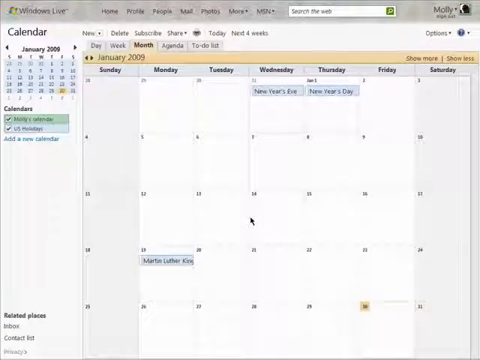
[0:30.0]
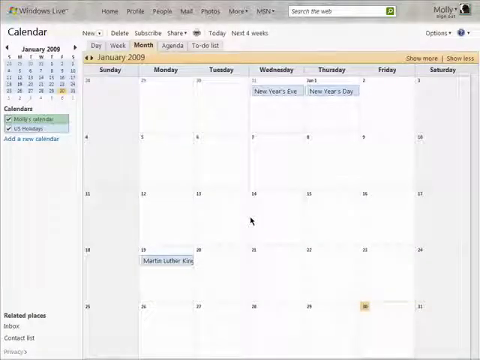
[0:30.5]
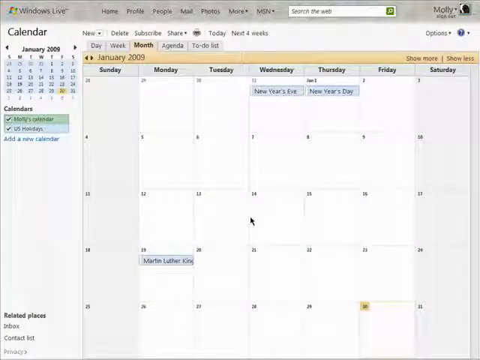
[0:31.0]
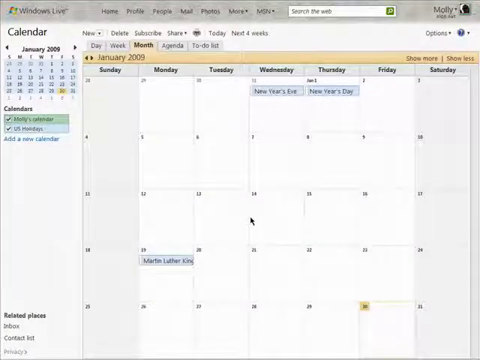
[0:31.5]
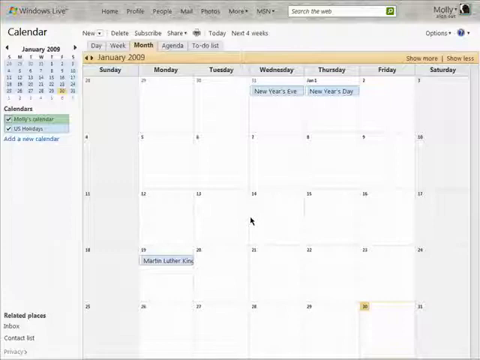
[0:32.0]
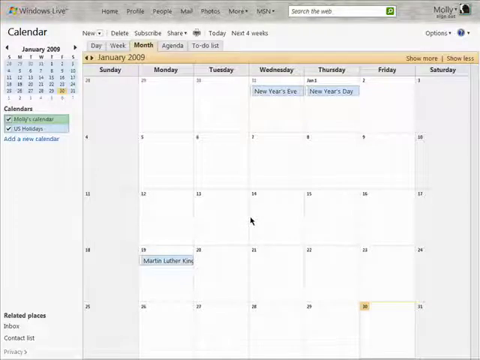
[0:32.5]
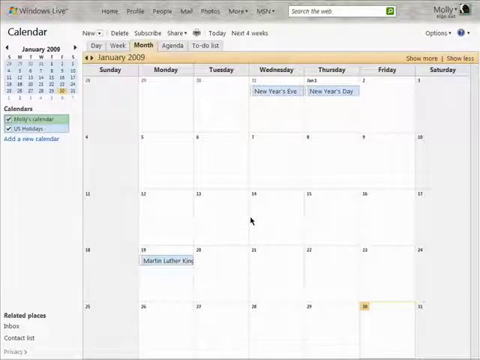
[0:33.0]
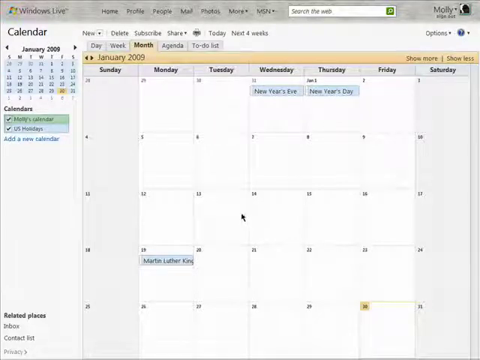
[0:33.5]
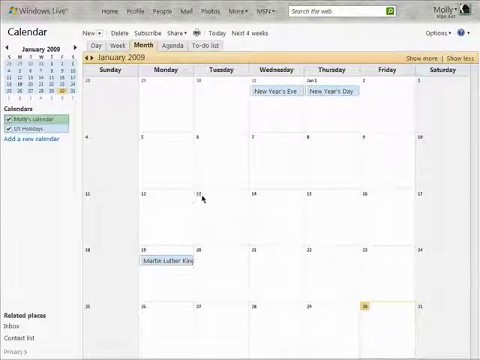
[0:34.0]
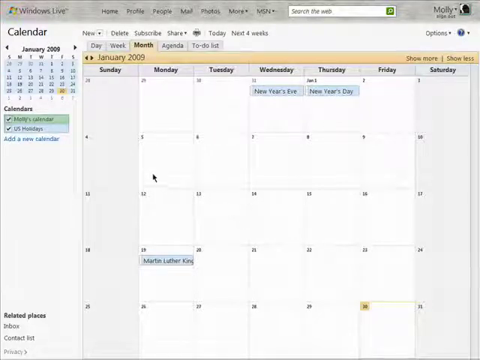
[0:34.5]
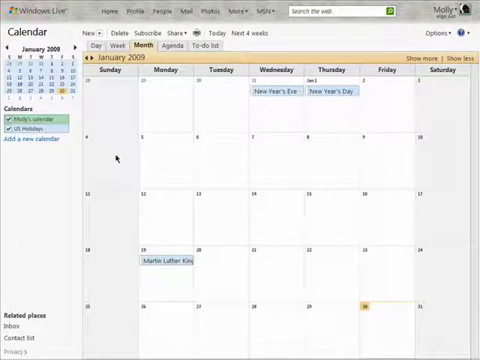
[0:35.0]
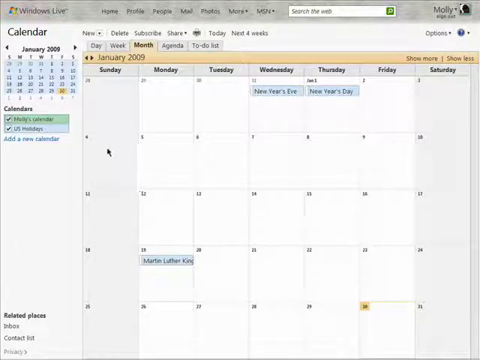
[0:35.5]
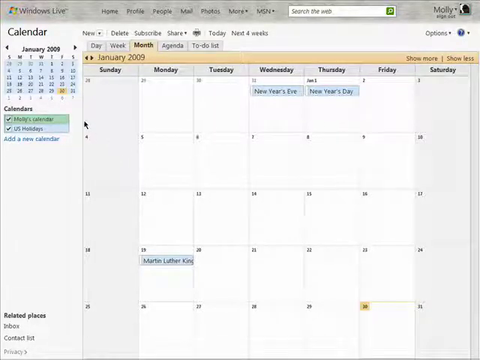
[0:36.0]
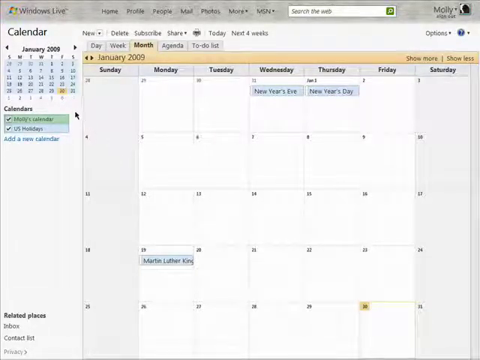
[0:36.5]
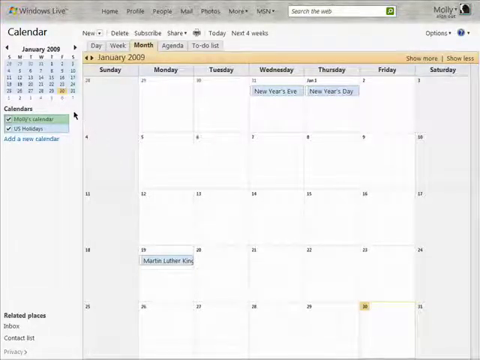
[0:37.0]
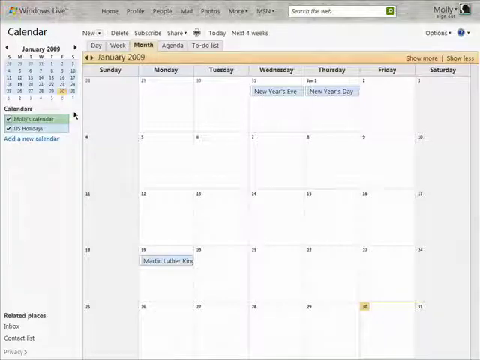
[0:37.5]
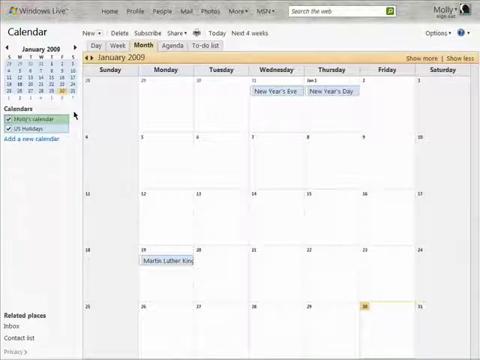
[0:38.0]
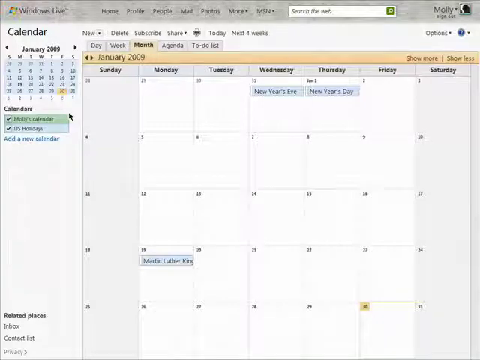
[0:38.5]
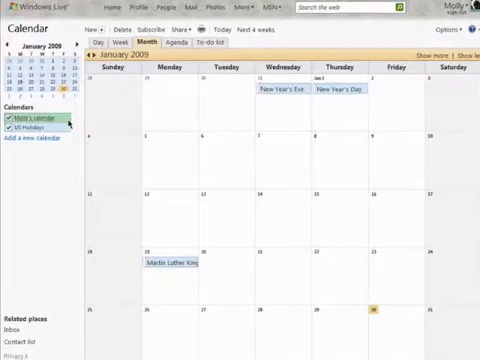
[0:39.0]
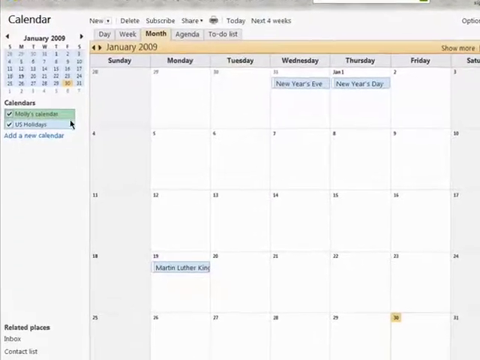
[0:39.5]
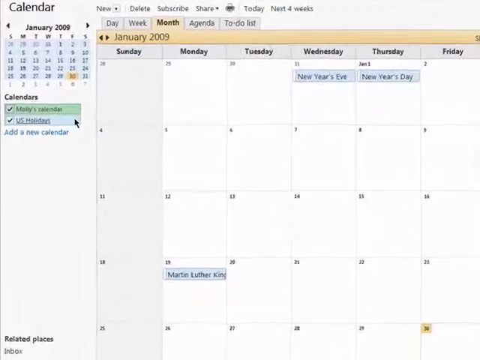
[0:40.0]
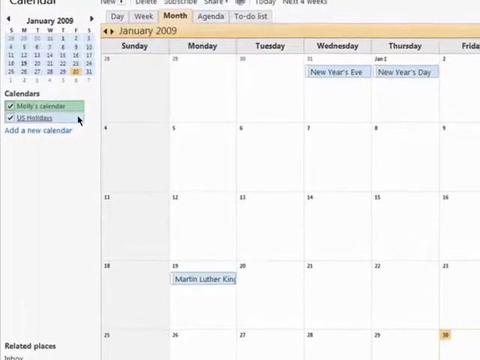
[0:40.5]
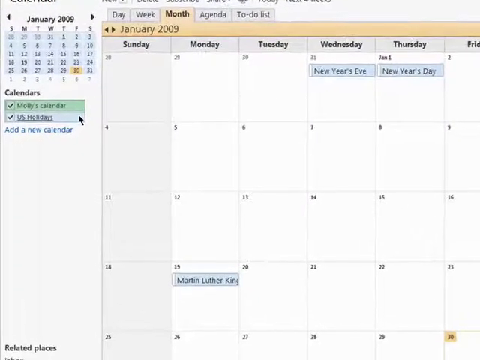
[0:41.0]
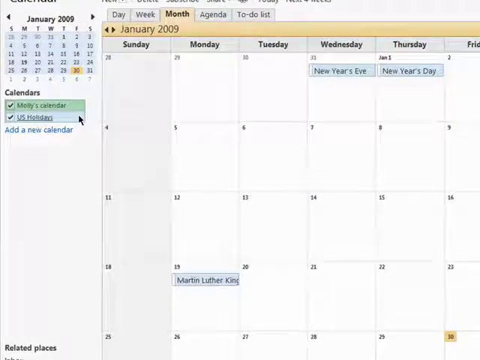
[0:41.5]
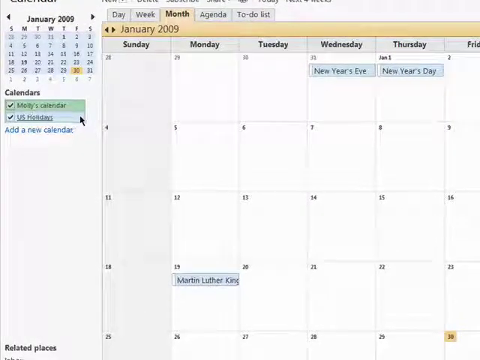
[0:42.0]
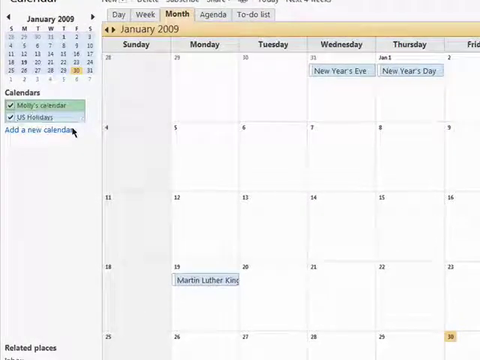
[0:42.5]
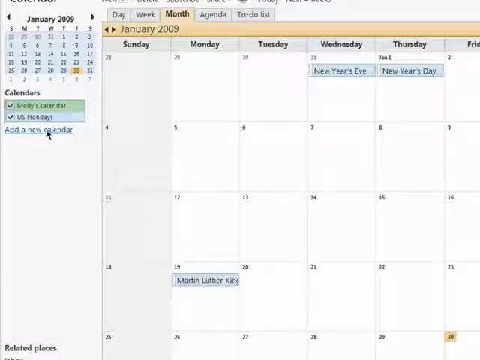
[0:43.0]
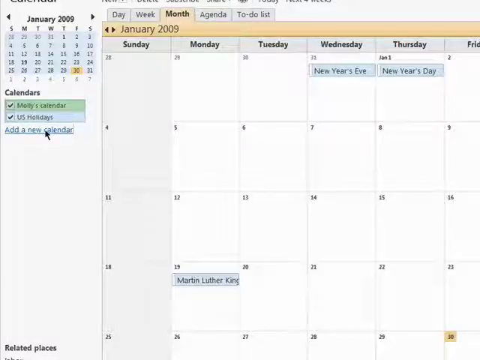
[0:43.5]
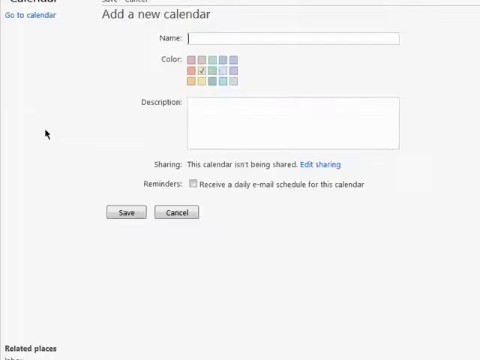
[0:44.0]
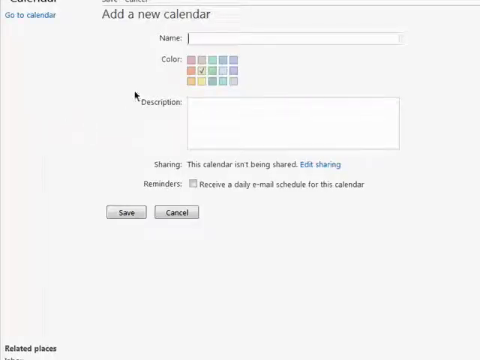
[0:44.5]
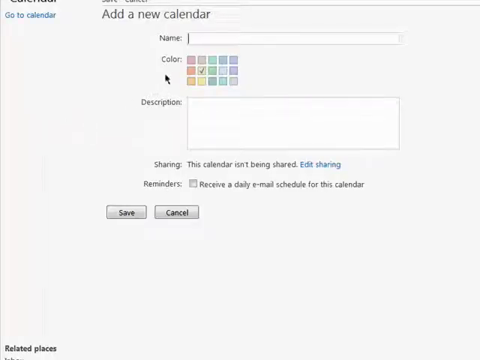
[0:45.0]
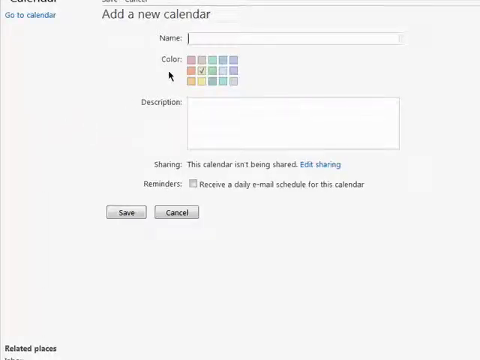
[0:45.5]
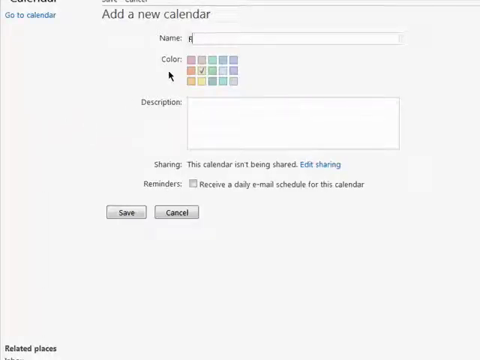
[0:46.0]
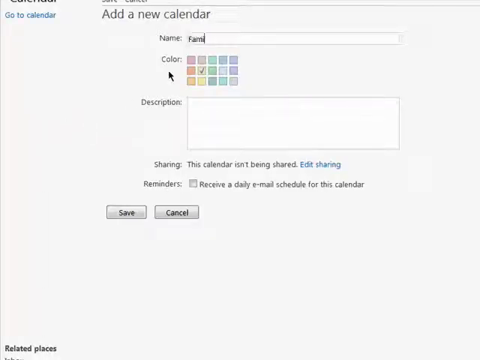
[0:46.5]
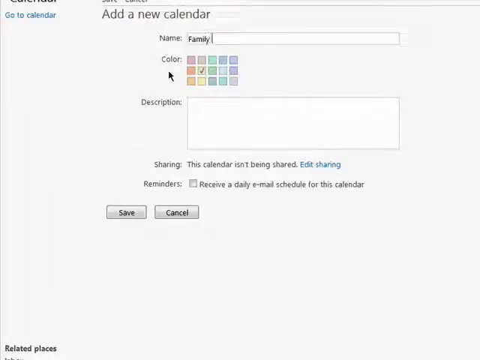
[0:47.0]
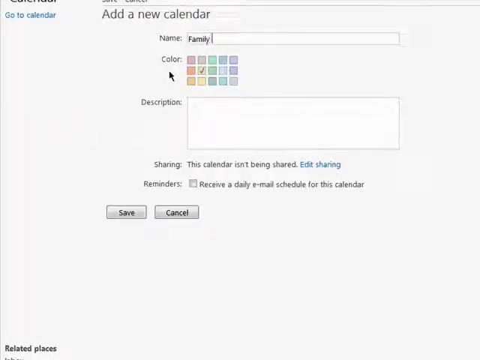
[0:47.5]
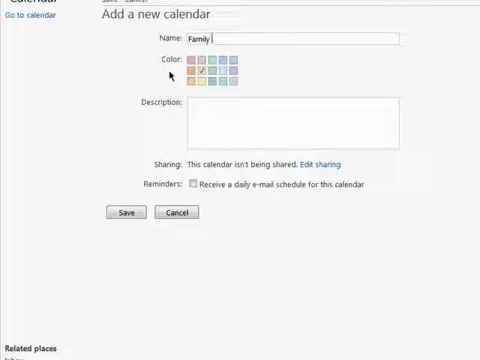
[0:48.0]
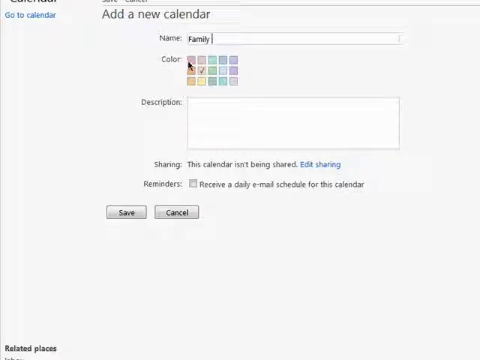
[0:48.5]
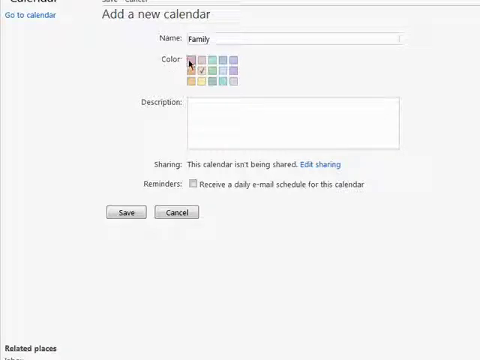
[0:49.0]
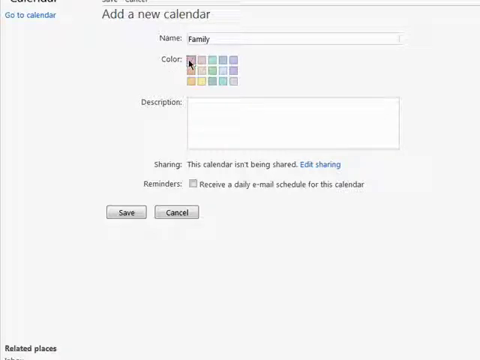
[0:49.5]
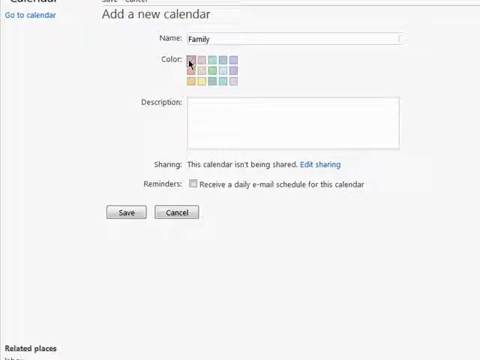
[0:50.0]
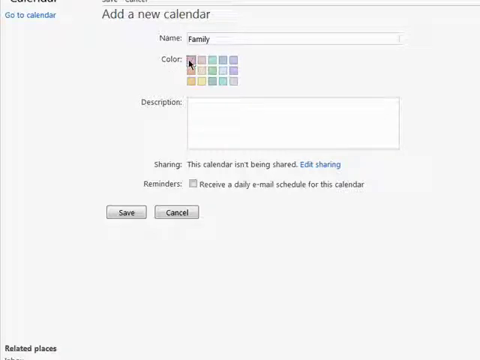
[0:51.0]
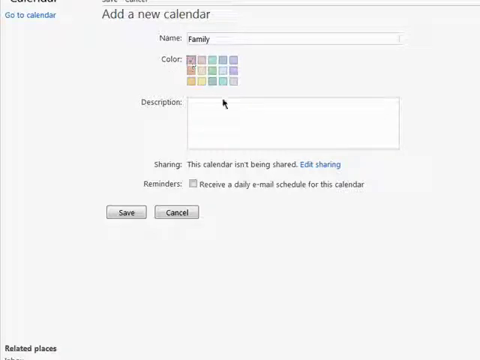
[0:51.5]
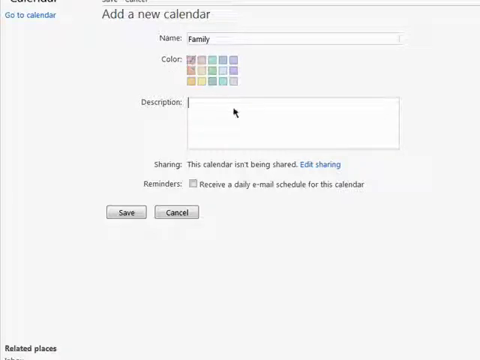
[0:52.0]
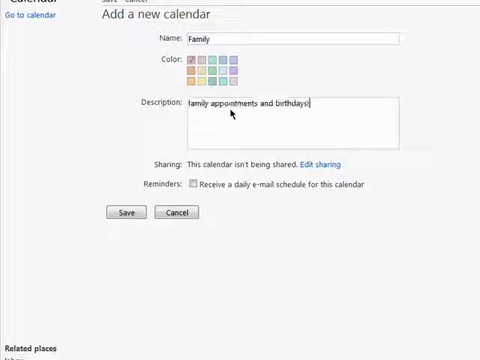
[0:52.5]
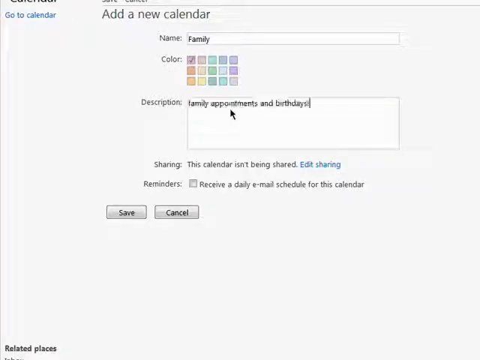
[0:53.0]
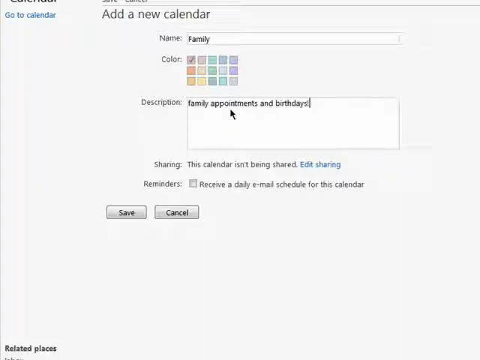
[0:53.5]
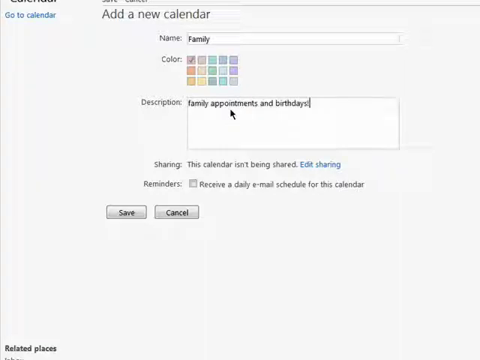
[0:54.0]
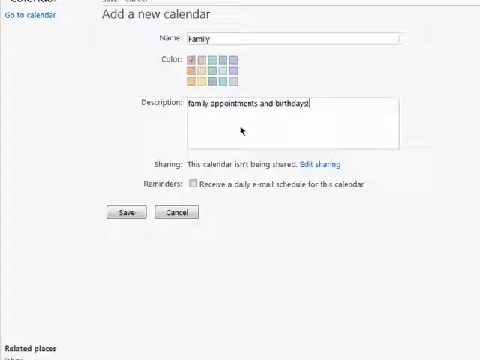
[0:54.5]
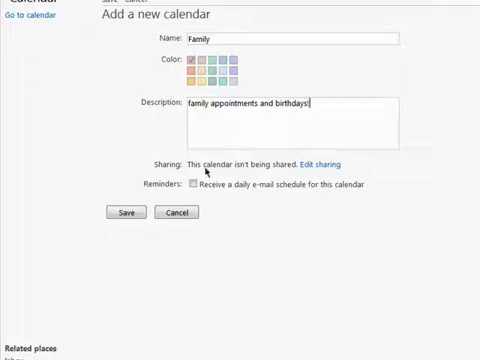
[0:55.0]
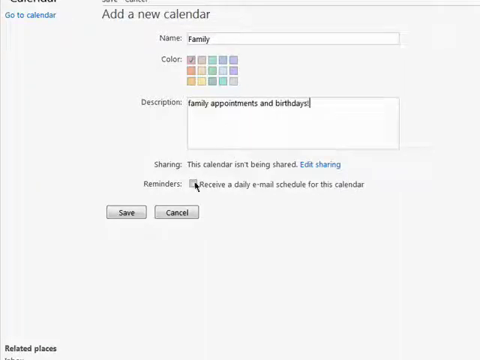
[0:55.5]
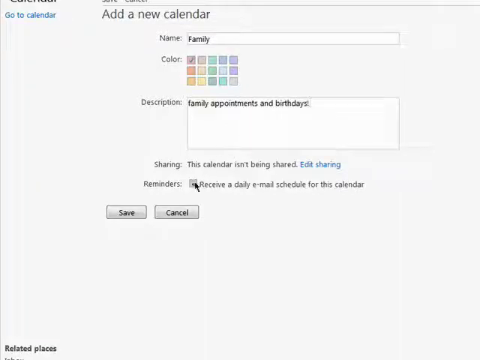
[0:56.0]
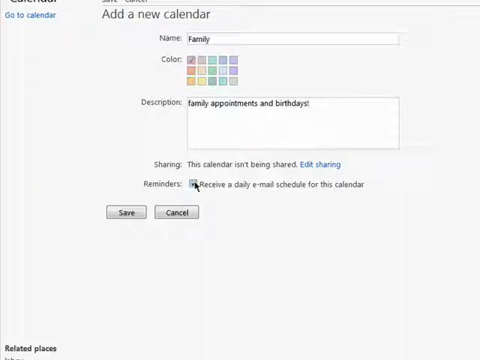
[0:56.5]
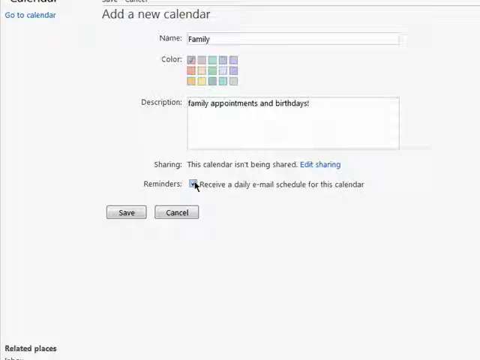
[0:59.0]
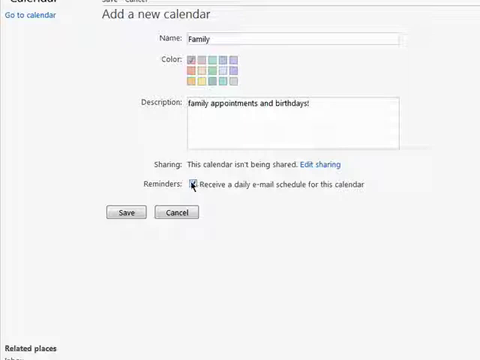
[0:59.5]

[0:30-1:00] A computer screen shows the Windows Live Calendar application by Microsoft. The top right-hand corner shows a user signed in, called Molly. The calendar is open in month view, showing January 2009, with three events: New Year's Eve, New Year's Day and Martin Luther King Day. The user moves the cursor to the left-hand side menu, where a calendar section lists two calendars, Mary's calendar and US holidays, each with a checkbox next to it. The user selects the "add a new calendar" hyperlink below, which opens a new pop-up window for adding a calendar. In an input box they type "family". They then select a colour from a 5 by 3 colour grid below, choosing the top left option, a pinky red colour. They type "family appointments and birthdays" in the description box, check the checkbox to receive reminders for this calendar, and move the cursor down to the save button.